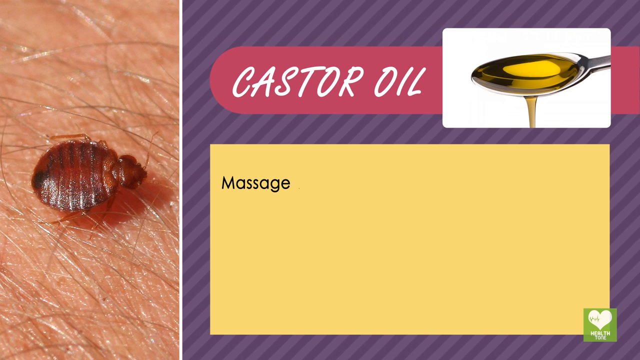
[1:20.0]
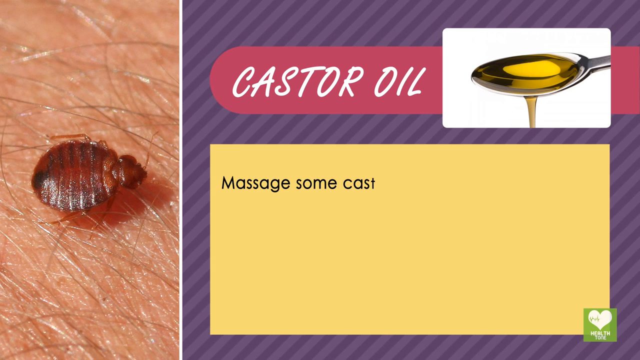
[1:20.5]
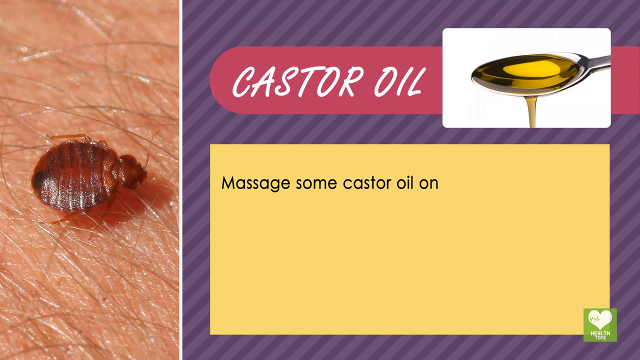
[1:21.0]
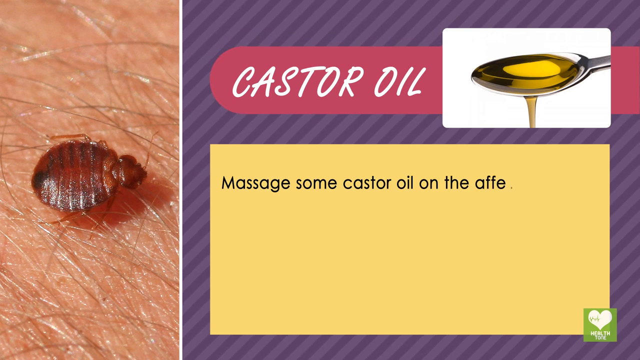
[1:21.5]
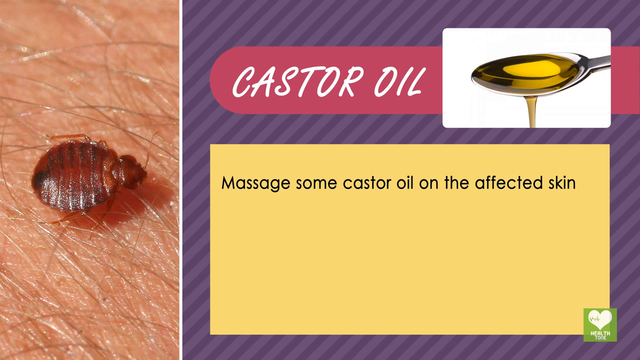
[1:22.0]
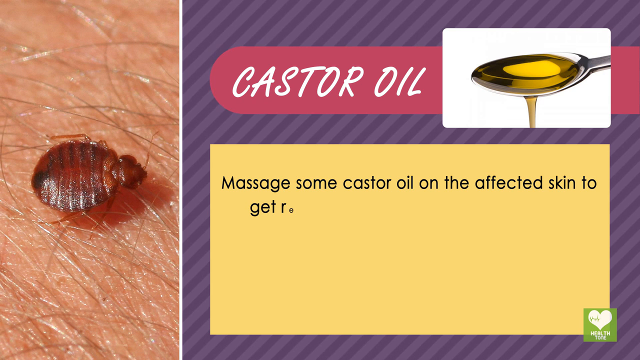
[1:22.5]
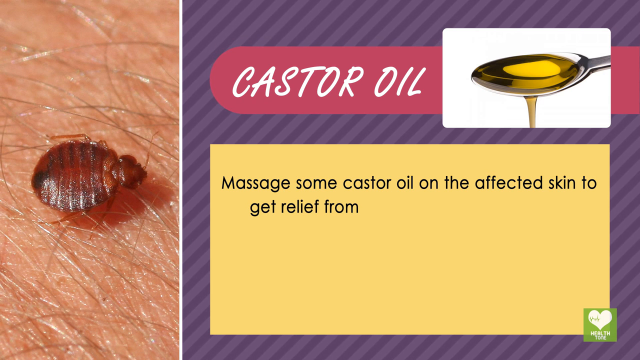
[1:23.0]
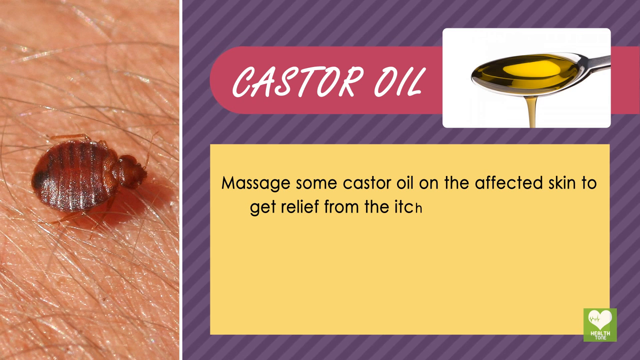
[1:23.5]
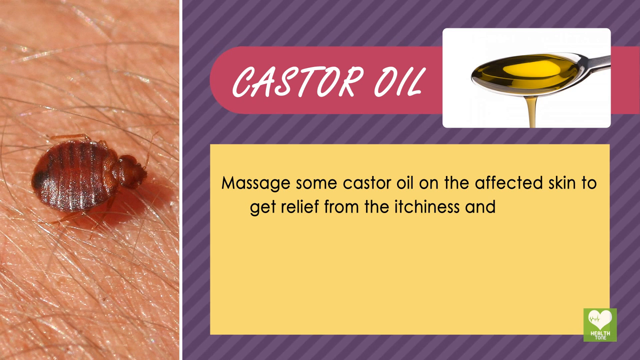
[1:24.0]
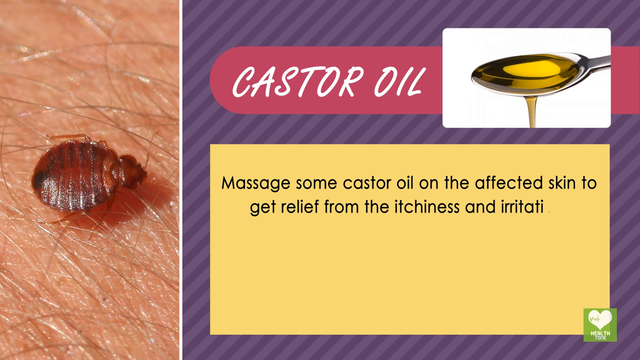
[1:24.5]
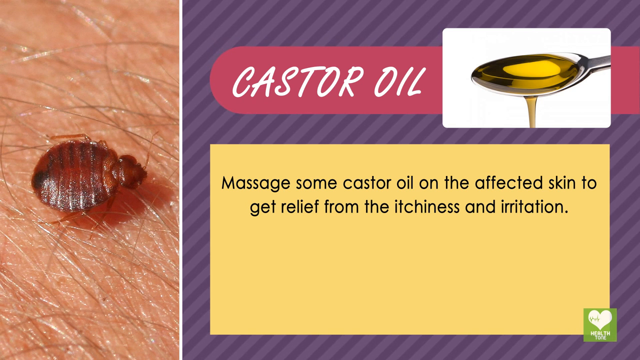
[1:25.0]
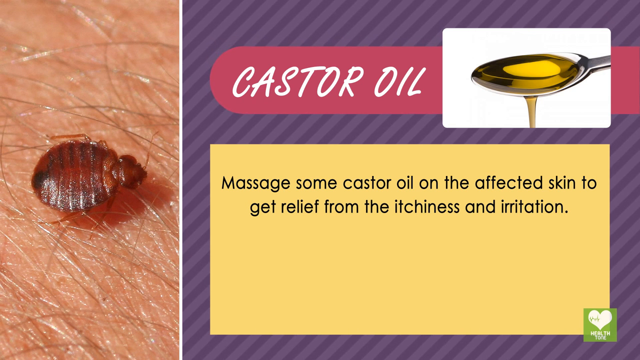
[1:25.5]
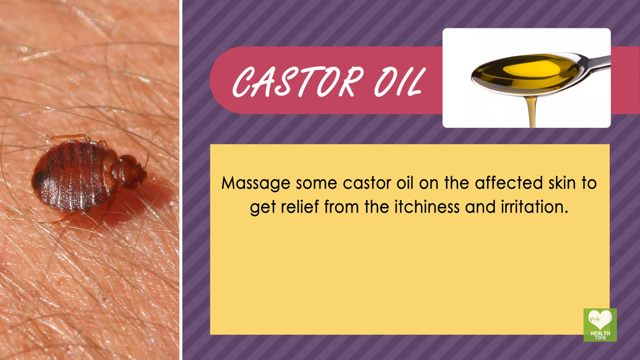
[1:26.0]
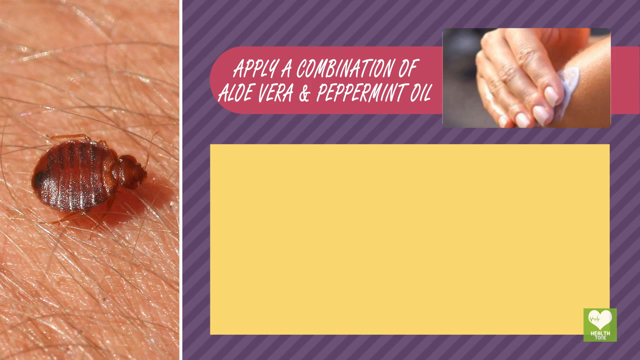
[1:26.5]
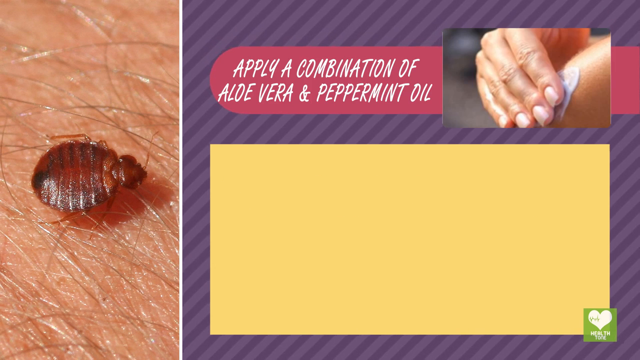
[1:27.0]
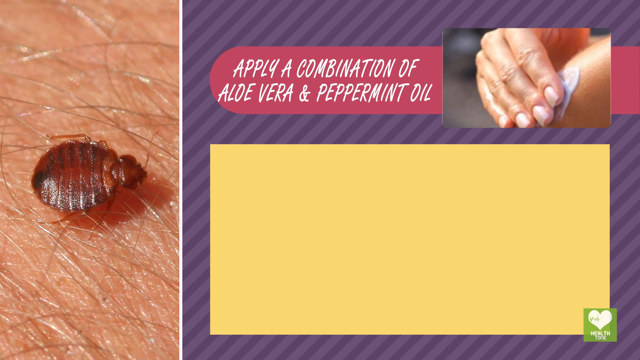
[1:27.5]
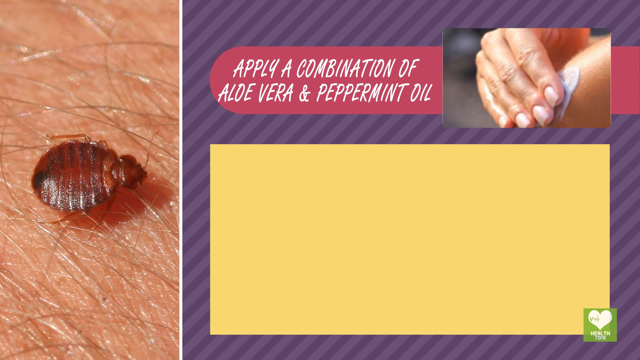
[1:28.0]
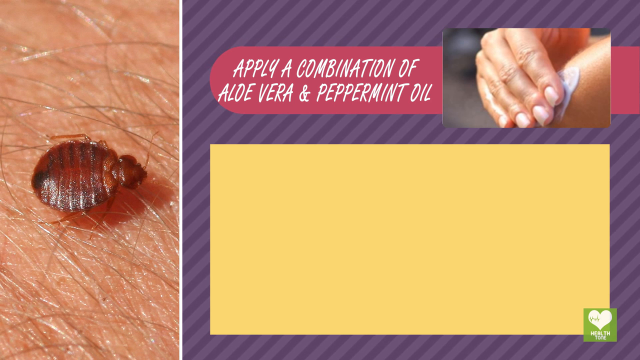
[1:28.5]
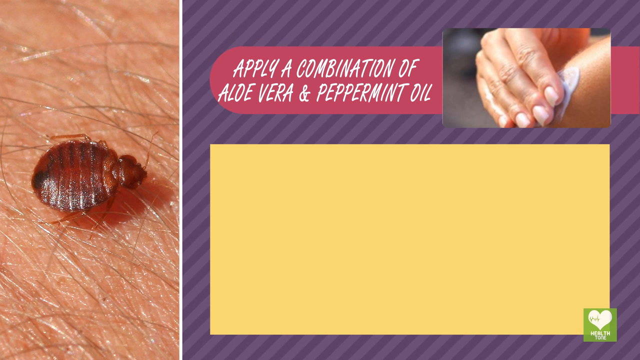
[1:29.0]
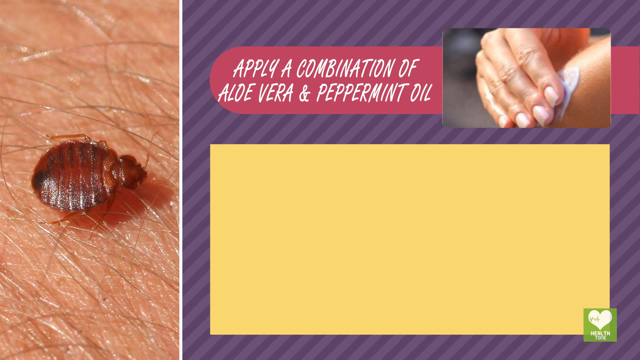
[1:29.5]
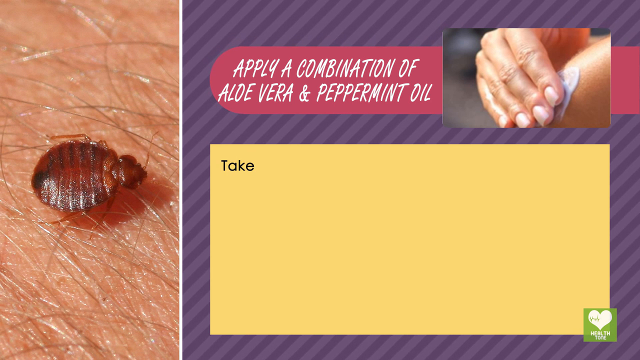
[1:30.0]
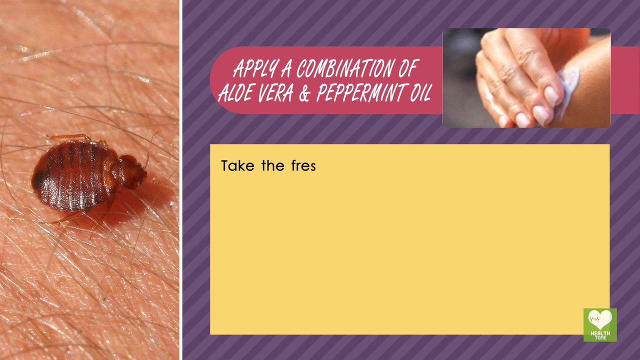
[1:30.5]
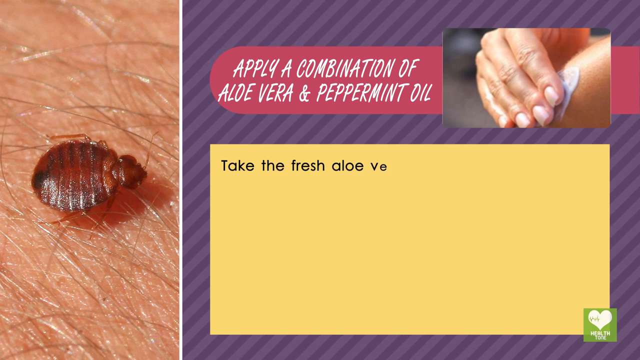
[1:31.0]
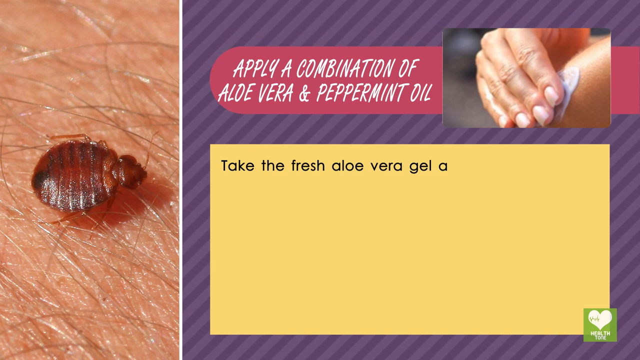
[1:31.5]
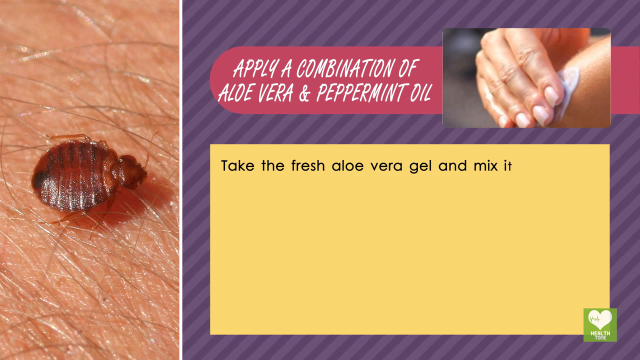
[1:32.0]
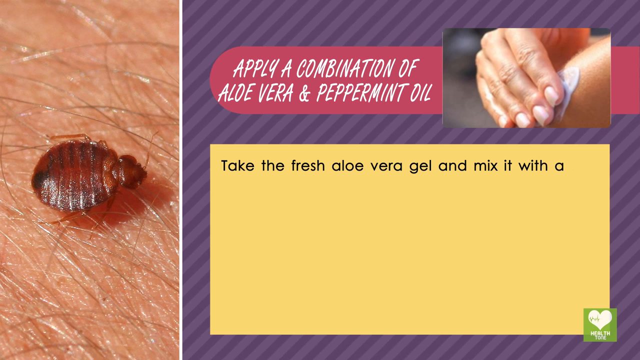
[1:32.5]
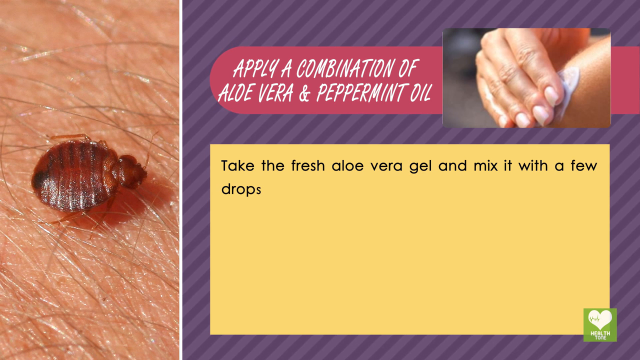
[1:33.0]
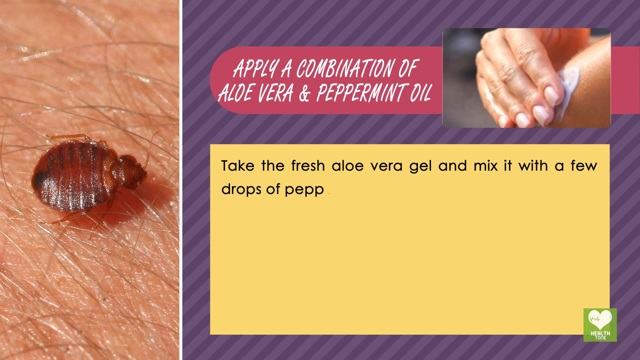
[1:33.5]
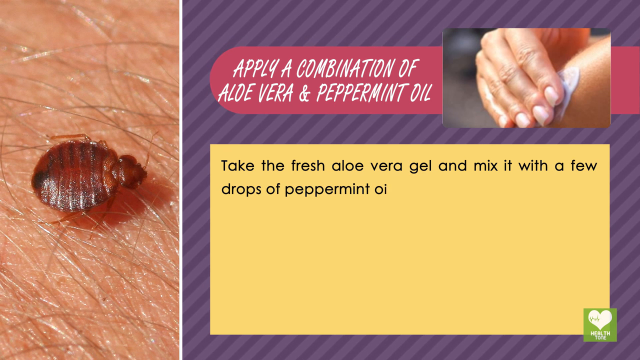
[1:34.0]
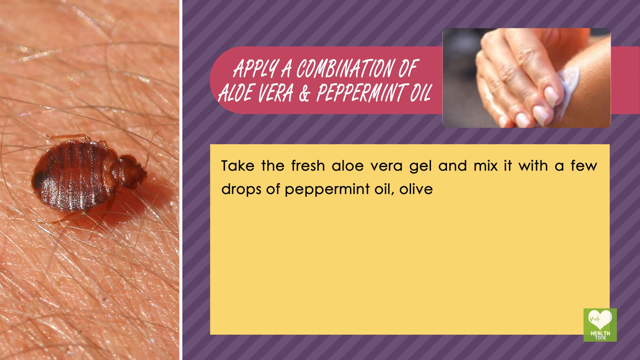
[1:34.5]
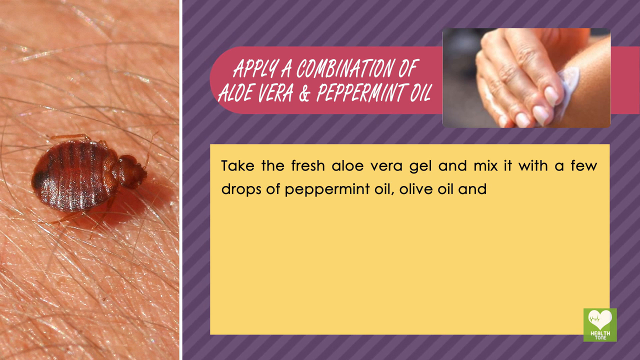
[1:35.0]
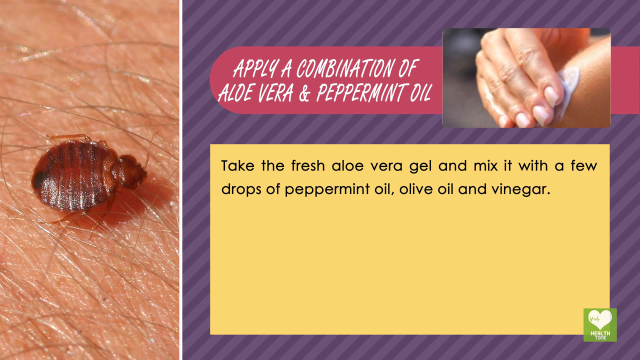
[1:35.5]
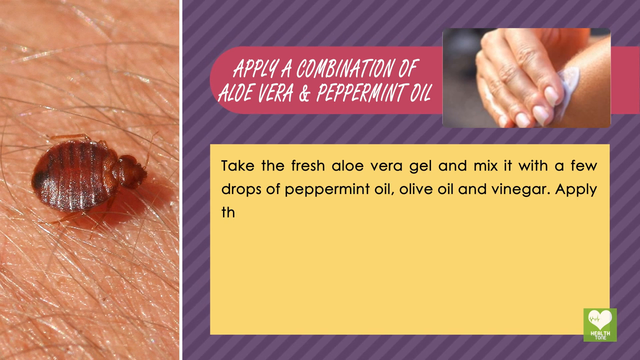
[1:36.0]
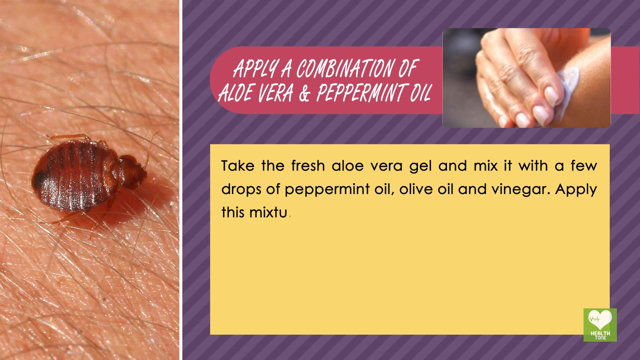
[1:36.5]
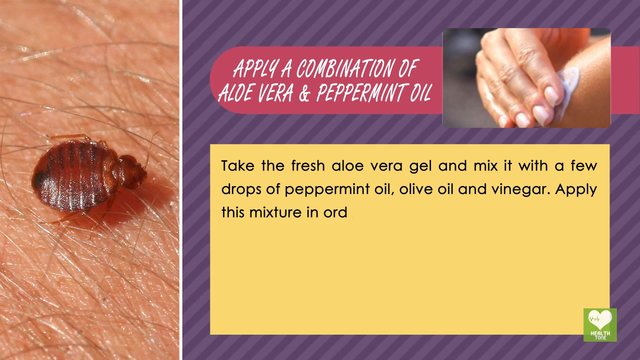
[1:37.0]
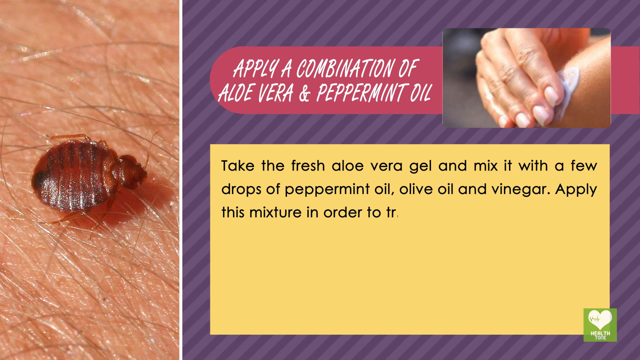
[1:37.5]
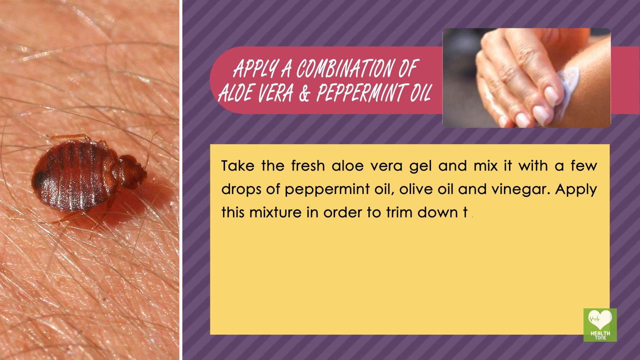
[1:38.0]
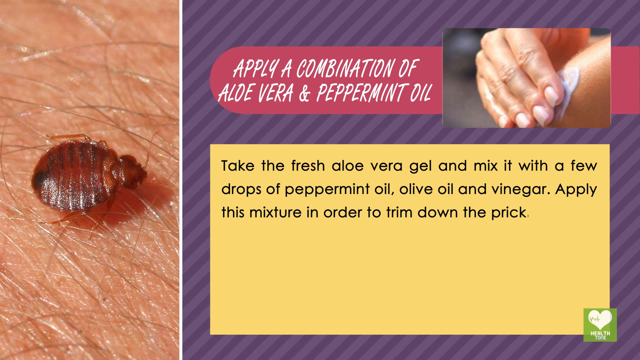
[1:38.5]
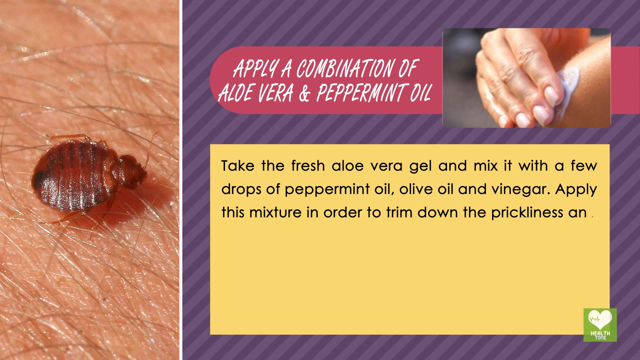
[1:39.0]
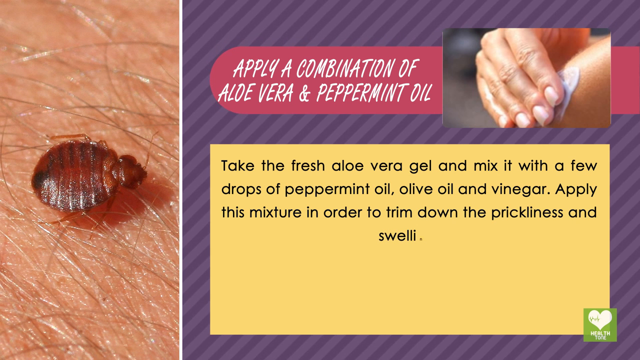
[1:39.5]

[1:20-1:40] The castor oil remedy is shown with "castor oil" written in the header, and directly to the right of the text is a silver spoon containing a yellow liquid that seems to be overflowing off the spoon and down into the white background. The instructions in the yellow box read: "massage some castor oil on the affected skin to get relief from the itchiness and irritation." The next remedy is a combination of aloe vera and peppermint oil, with a two-line headline: "apply a combination of" and "aloe vera and peppermint oil." In the image directly to the left, a hand is massaging what looks to be a white lotion onto skin. The yellow box instructions read: "take the fresh aloe vera gel and mix it with a few drops of peppermint oil, olive oil, and vinegar. Apply this mixture in order to trim down the prickliness and swelling."